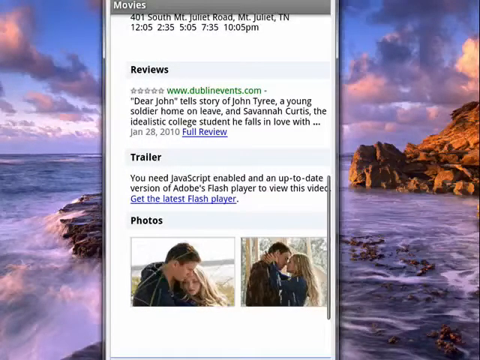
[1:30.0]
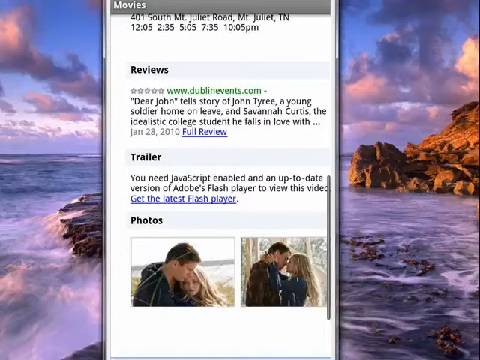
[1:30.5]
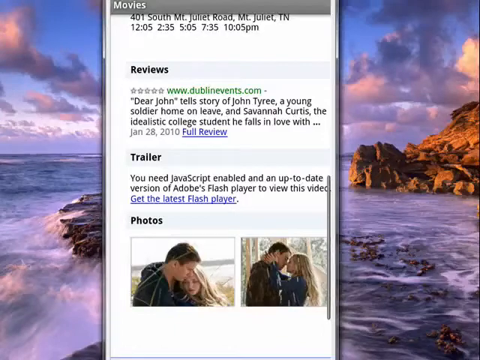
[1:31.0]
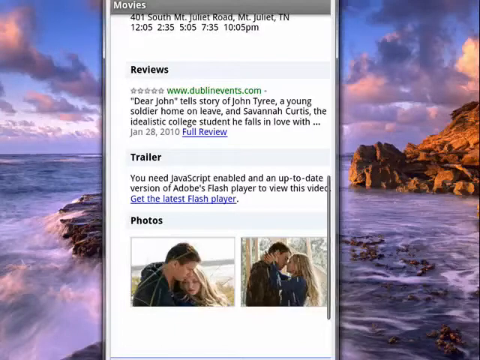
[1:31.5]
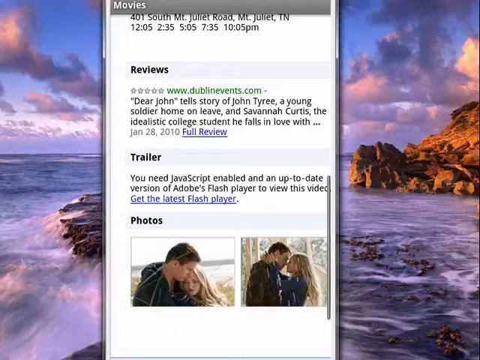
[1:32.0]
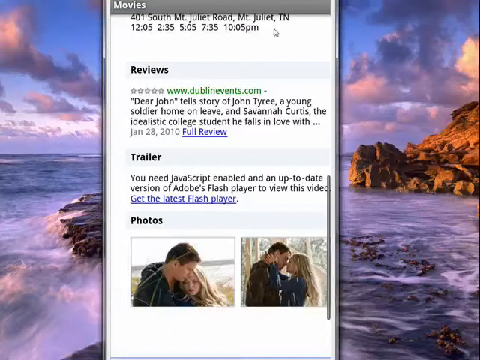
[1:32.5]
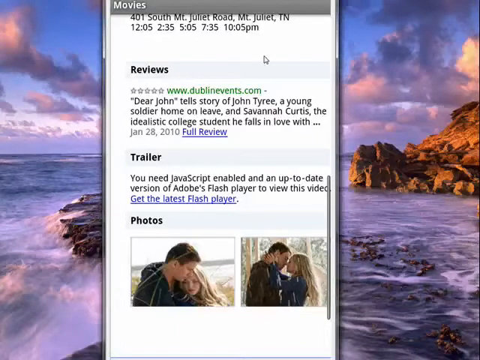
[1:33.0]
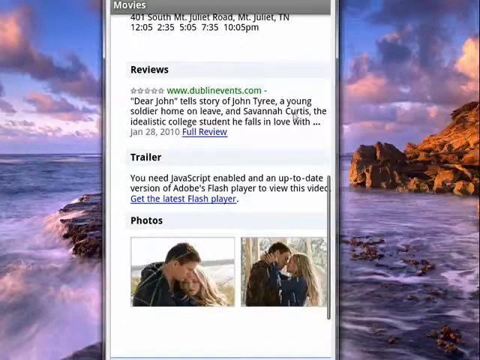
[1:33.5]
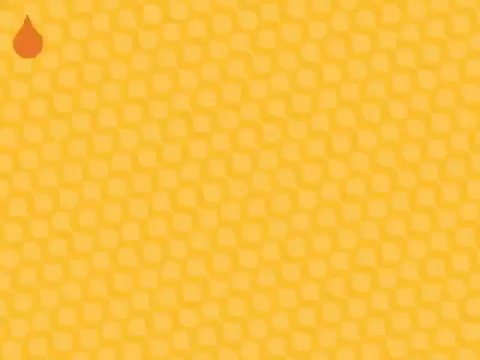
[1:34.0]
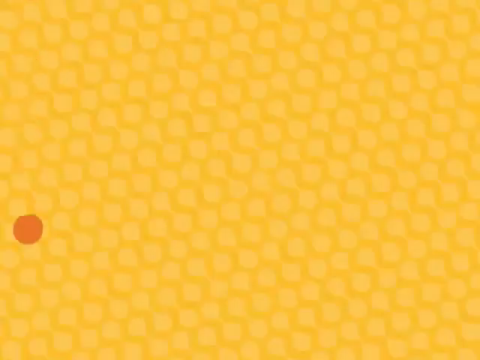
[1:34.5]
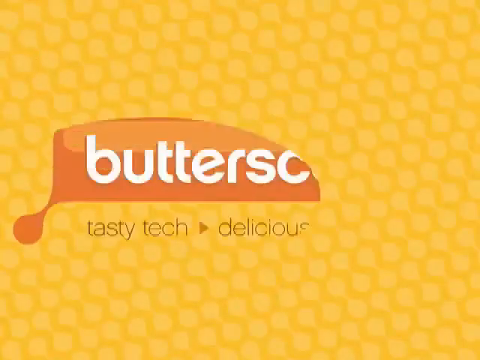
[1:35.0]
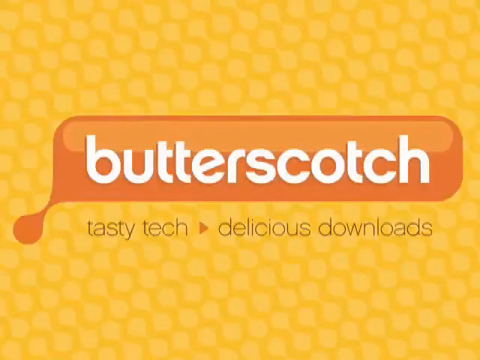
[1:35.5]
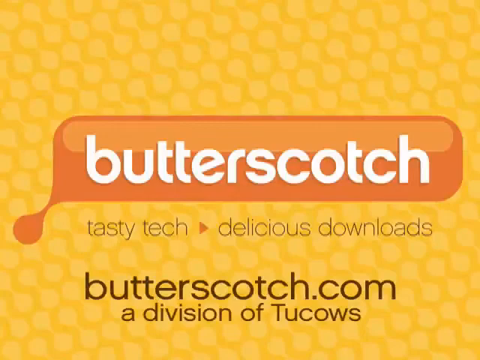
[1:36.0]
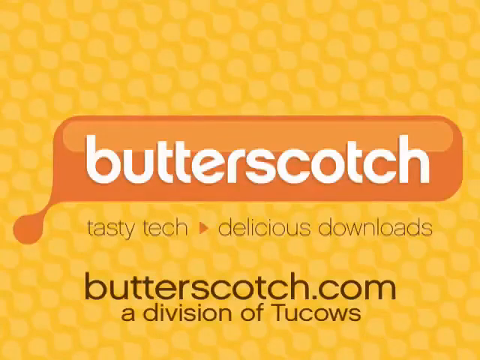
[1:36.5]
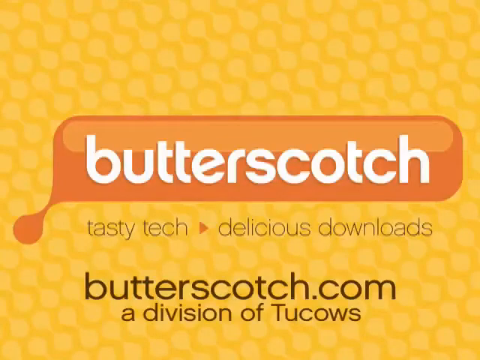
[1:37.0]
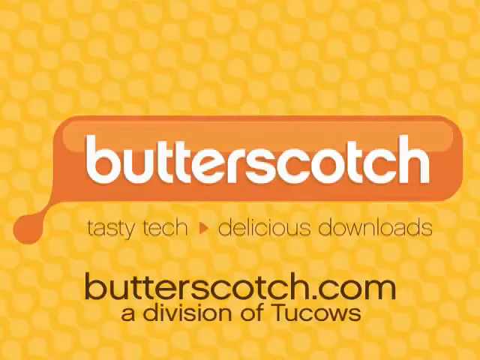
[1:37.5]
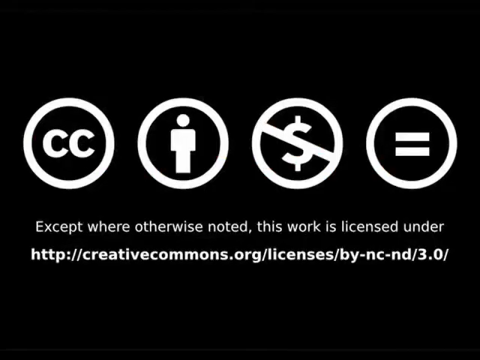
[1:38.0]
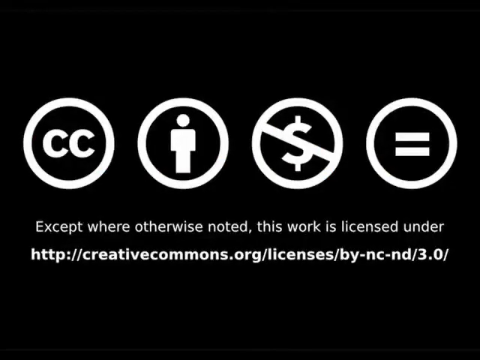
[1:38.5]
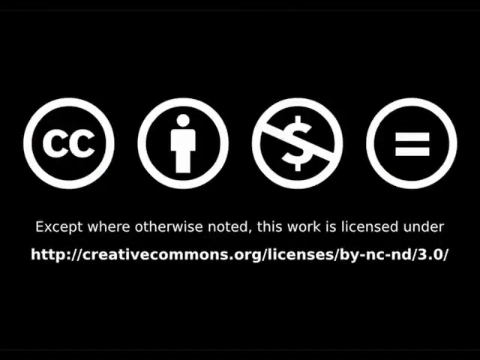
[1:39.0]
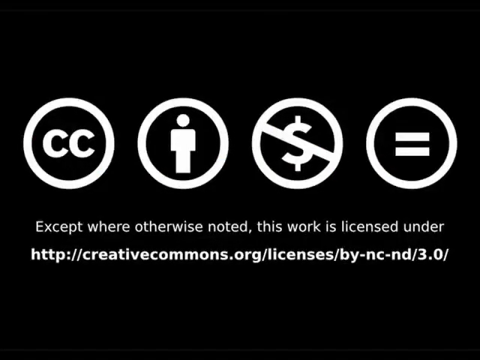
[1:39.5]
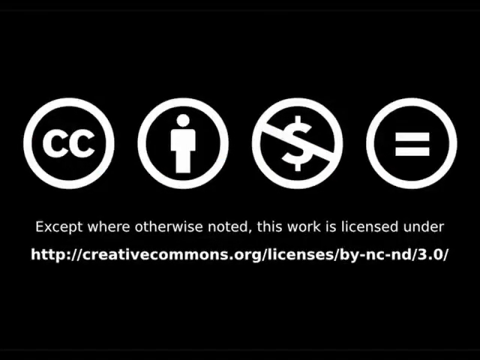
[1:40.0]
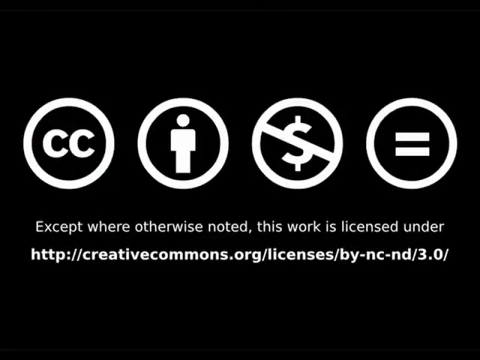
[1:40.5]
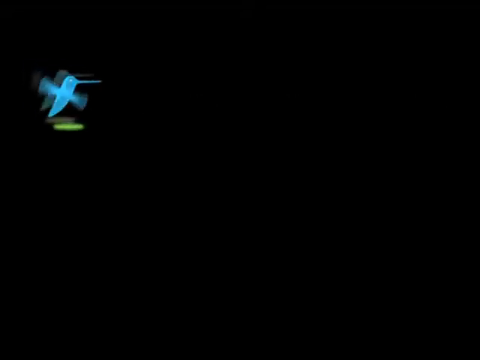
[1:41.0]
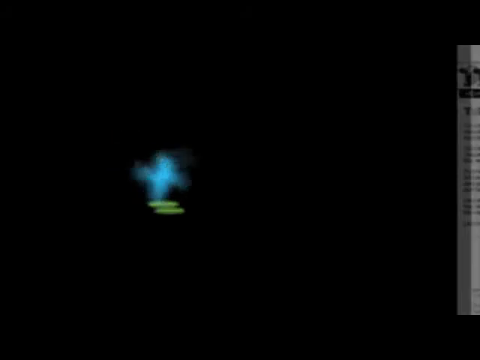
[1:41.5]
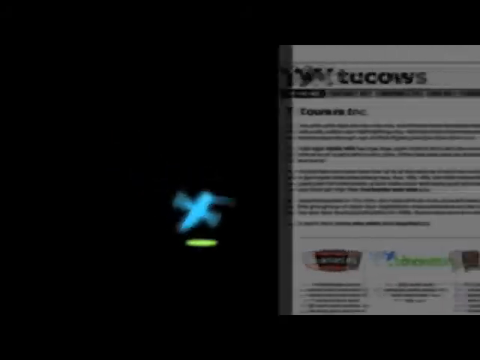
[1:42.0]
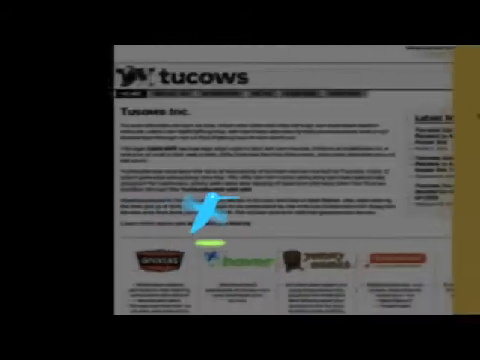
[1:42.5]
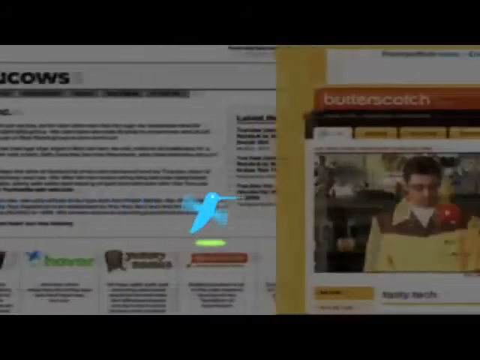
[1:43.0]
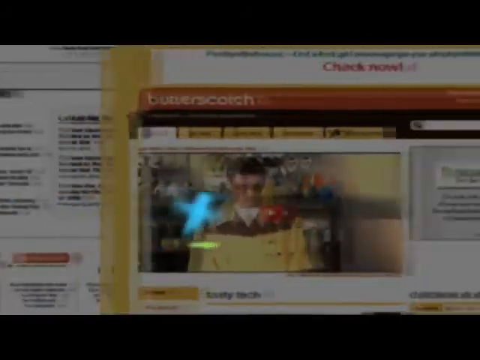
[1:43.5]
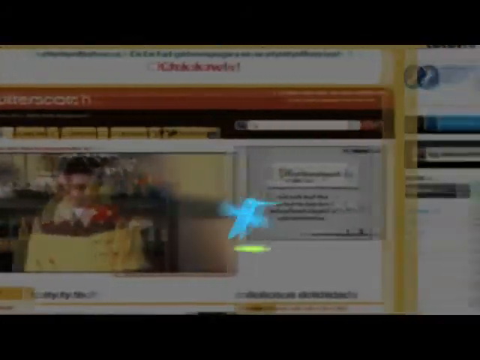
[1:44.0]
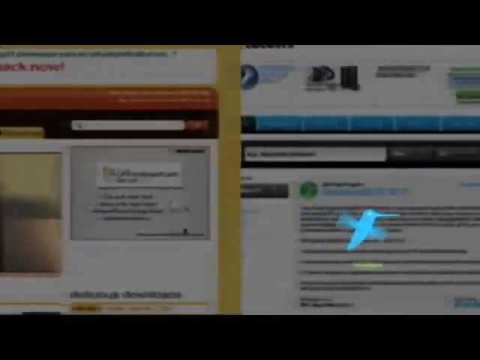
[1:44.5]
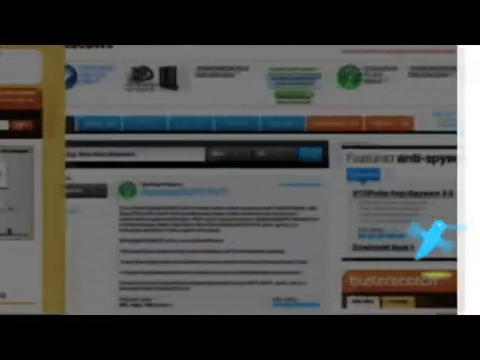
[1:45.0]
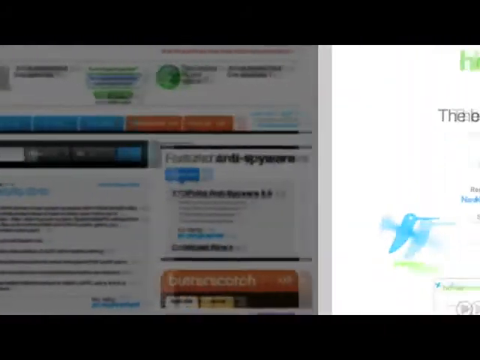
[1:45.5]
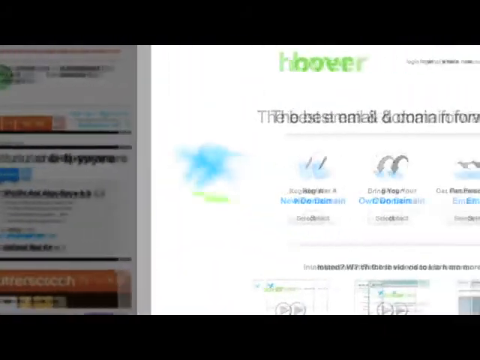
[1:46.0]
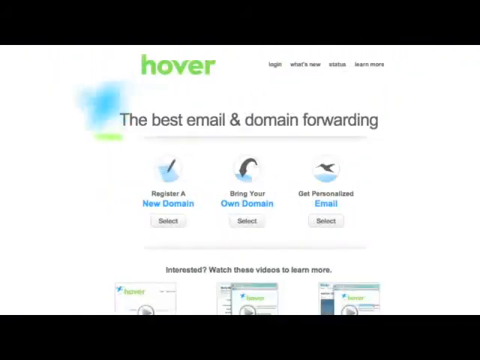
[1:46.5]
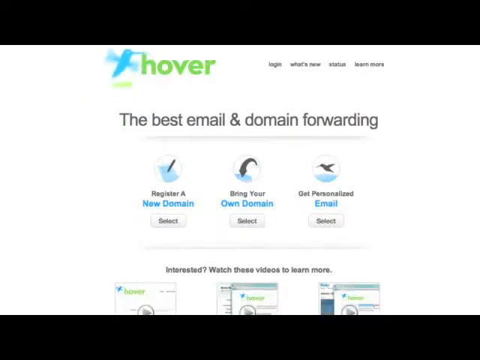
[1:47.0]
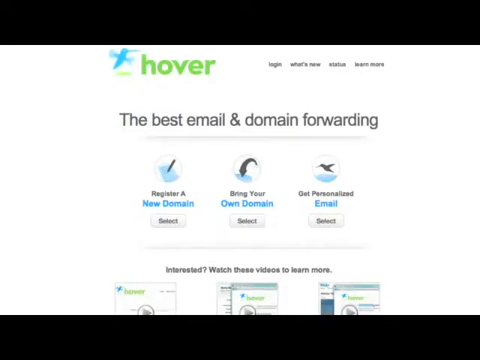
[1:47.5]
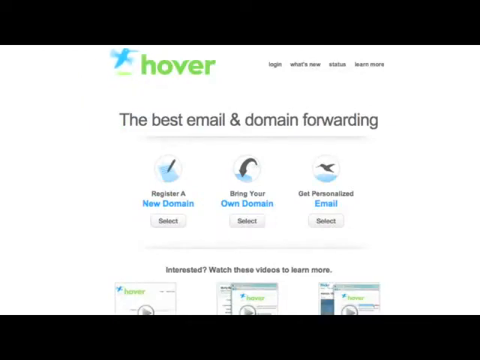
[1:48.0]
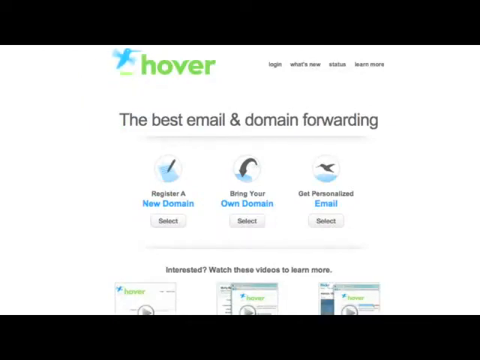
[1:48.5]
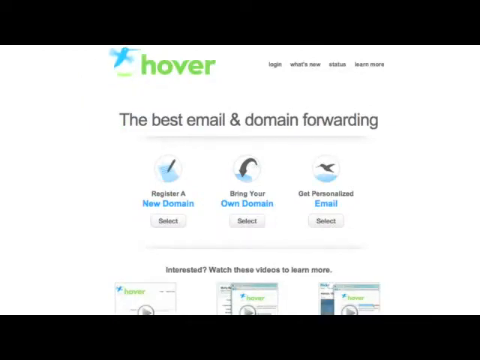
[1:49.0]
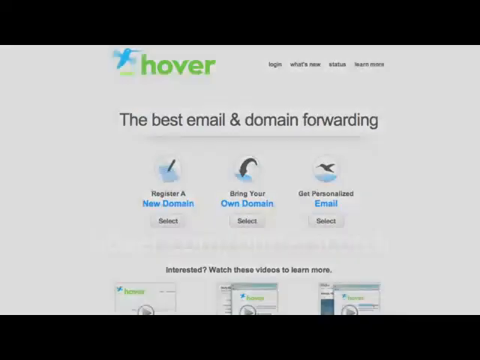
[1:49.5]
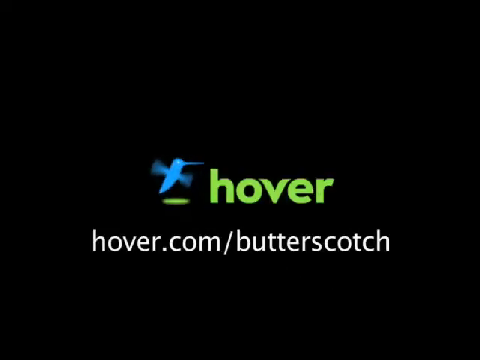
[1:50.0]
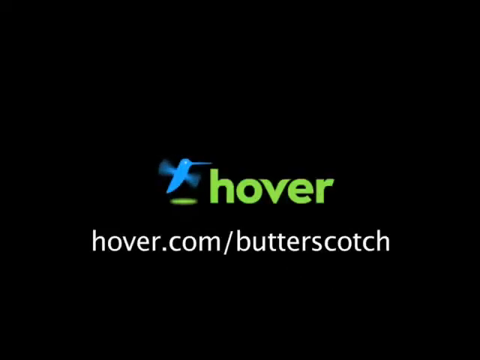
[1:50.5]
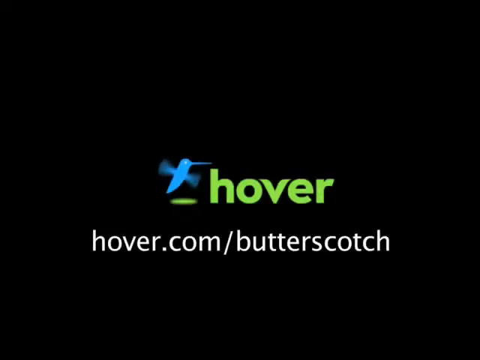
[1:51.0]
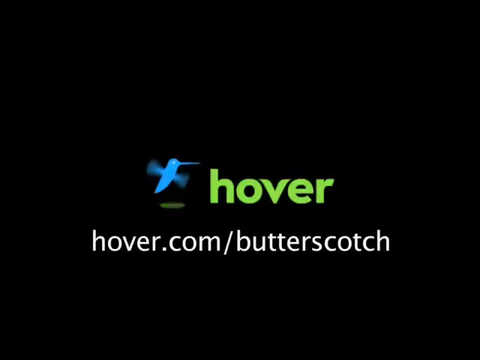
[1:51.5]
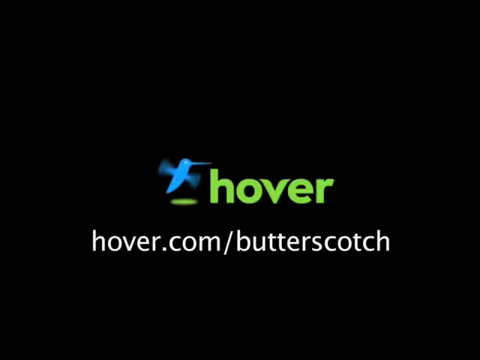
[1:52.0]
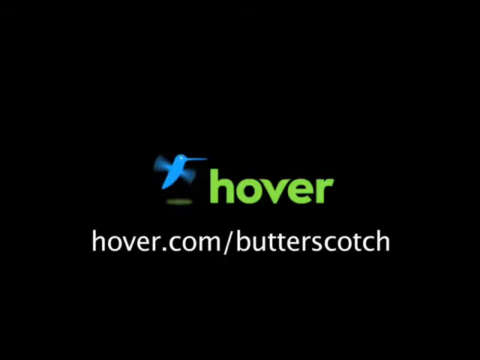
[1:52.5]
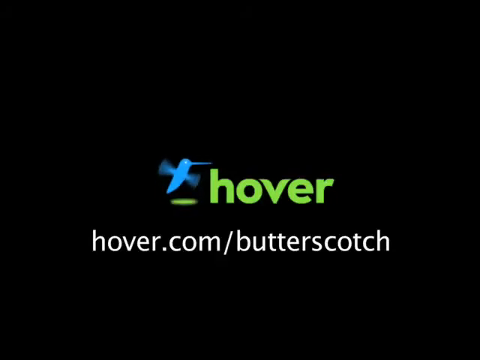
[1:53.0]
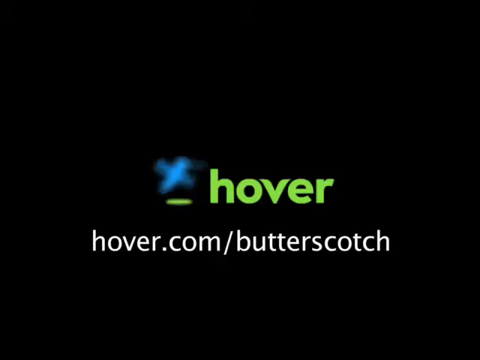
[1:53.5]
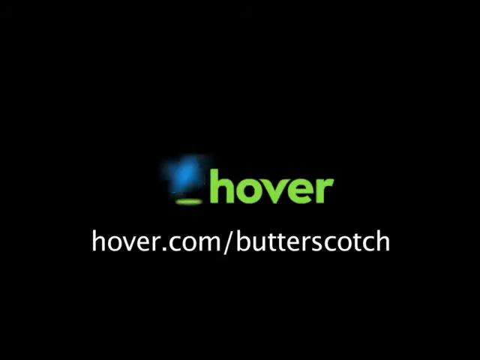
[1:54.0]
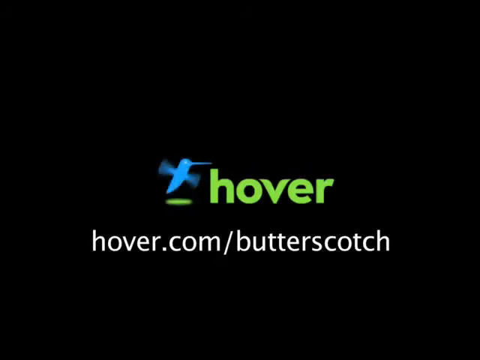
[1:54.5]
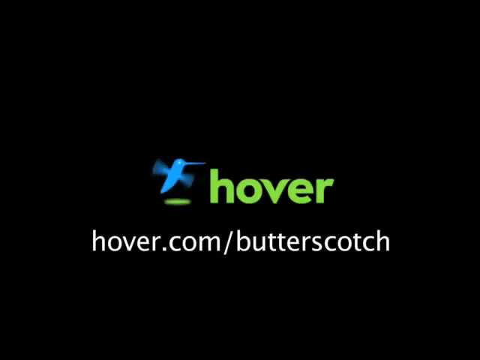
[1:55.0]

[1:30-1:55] The mouse moves over the screen, which is still on the section showing some of the showtime availability at the top for the cinema on Juliet Road, with reviews underneath. The visible review is written by Dublin Events and says "Dear John tells story of John Tyree, a young soldier home leave and Savannah Curtis the idealistic college student he falls in love with." Below it is an option to click on the full review. The screen then goes back to the orange background with pale orange spots. A dark orange spot appears on the left-hand side and moves into the butterscotch logo, and at the bottom it says "butterscotch.com a division of Tucows." Four signs follow: one with a cc in it, one with a person, one with a crossed-out dollar and one with an equal sign, with text below them. A video then appears on the screen, moving through different websites before finishing on hover, which says "the best email and domain forwarding," as an advertisement.